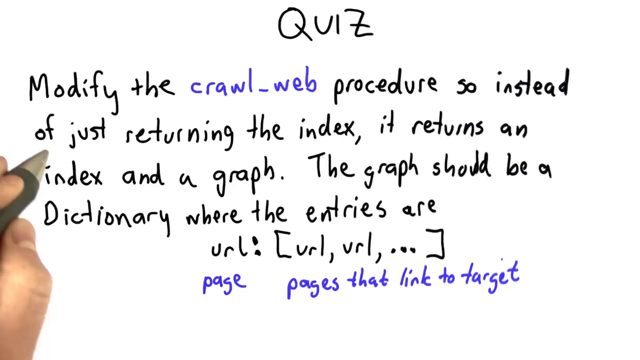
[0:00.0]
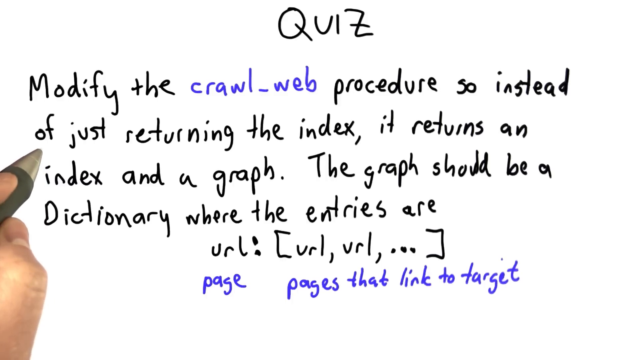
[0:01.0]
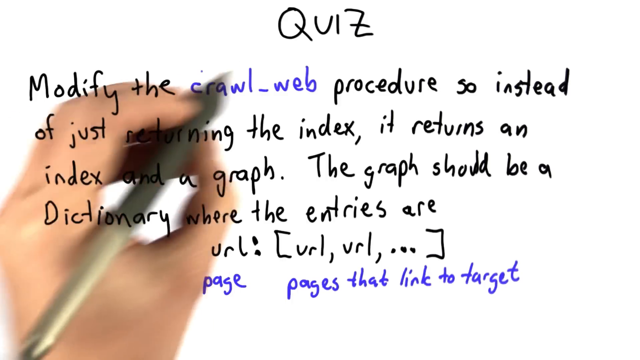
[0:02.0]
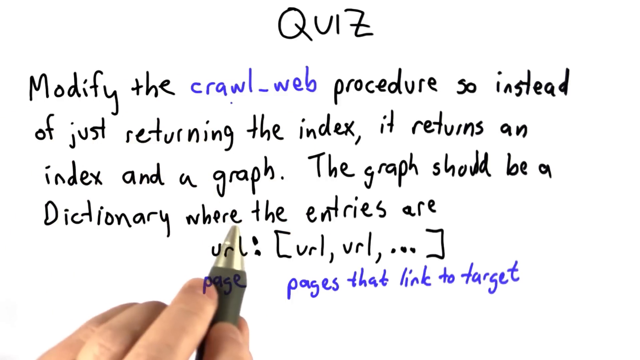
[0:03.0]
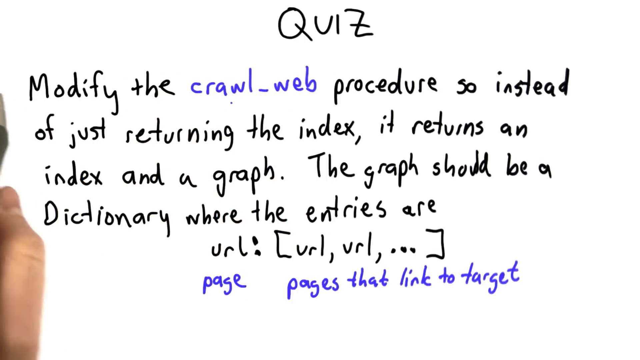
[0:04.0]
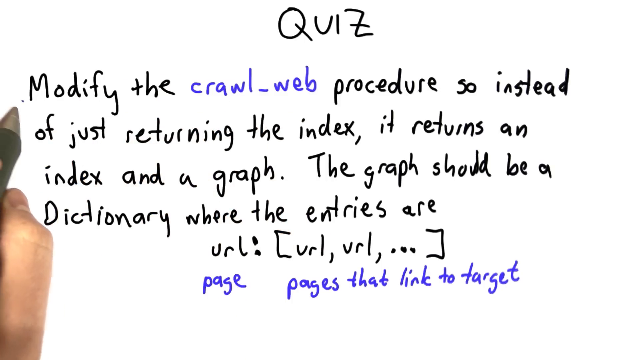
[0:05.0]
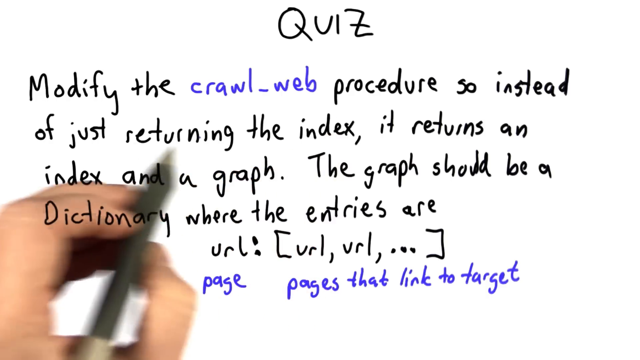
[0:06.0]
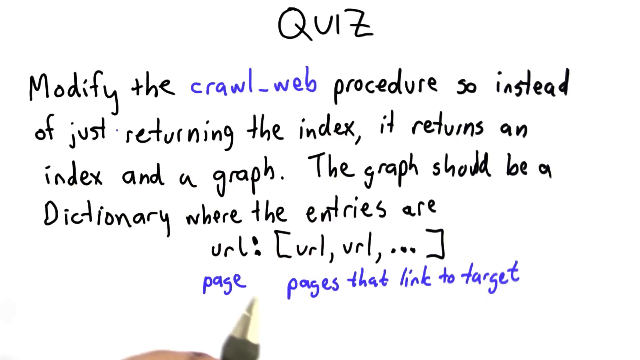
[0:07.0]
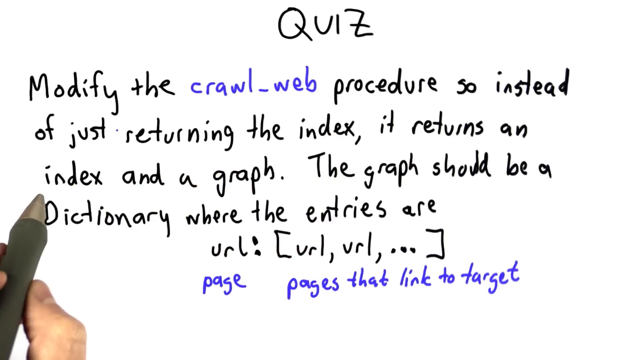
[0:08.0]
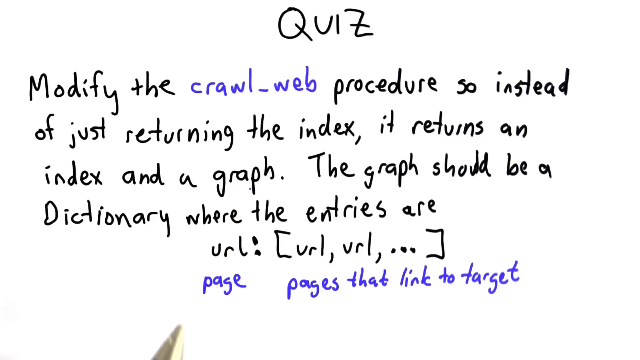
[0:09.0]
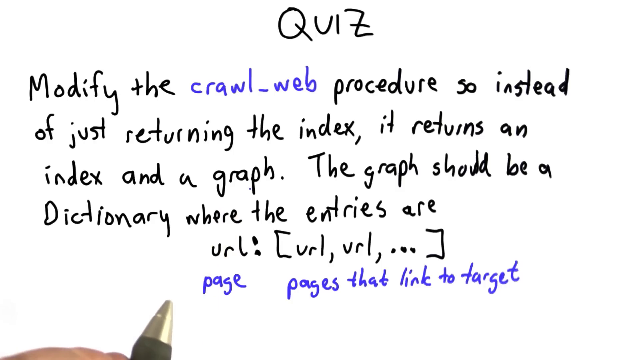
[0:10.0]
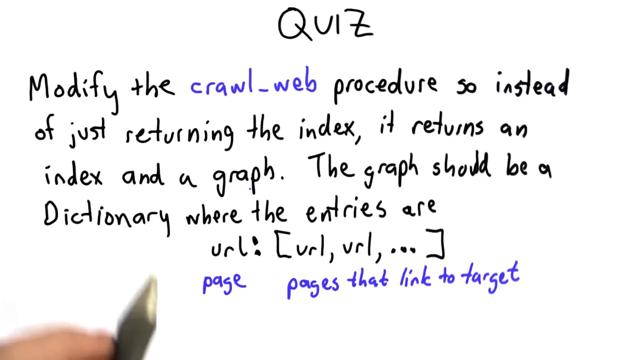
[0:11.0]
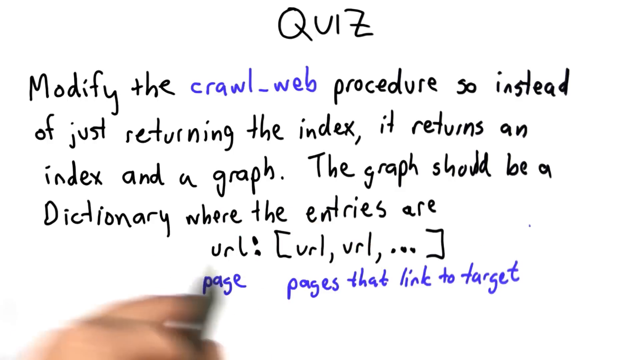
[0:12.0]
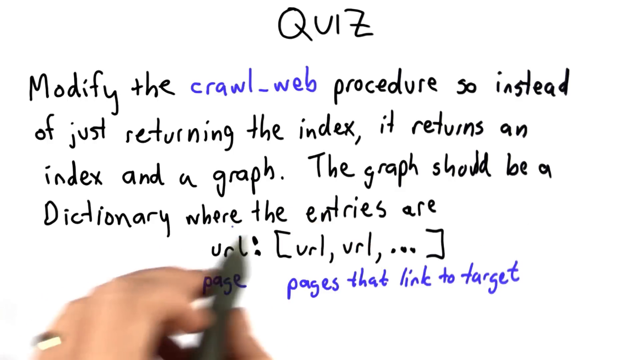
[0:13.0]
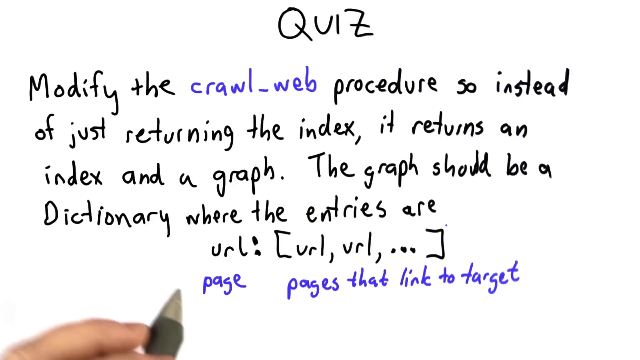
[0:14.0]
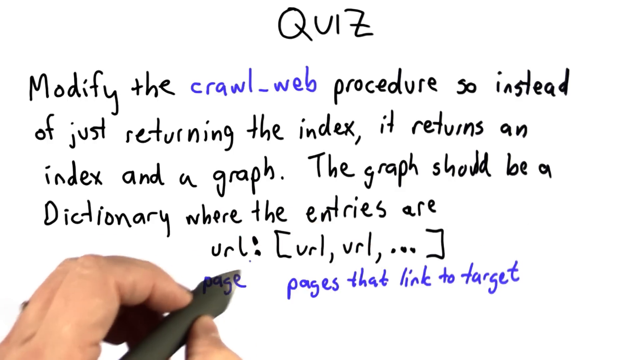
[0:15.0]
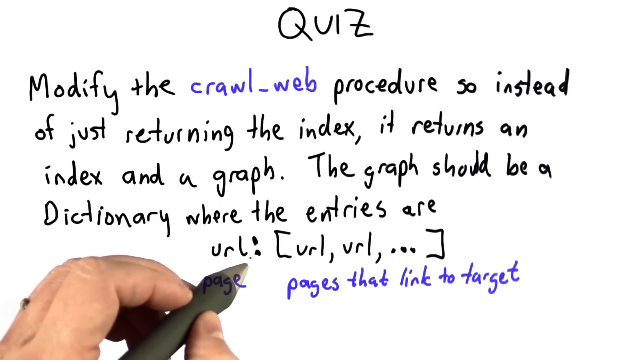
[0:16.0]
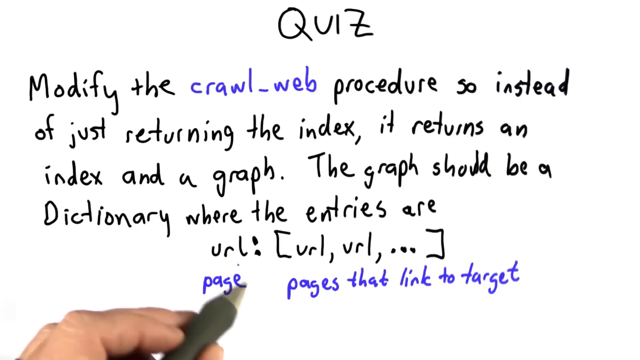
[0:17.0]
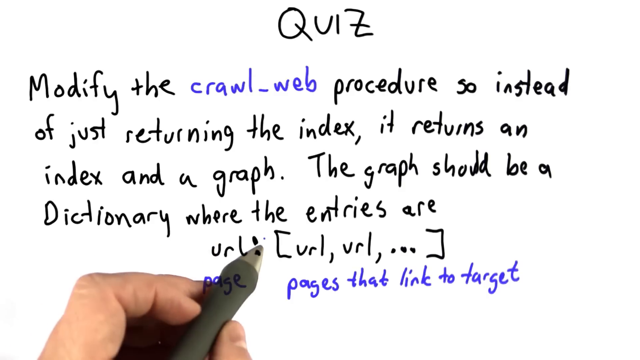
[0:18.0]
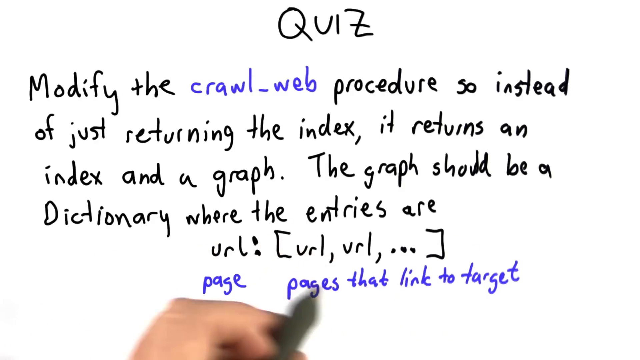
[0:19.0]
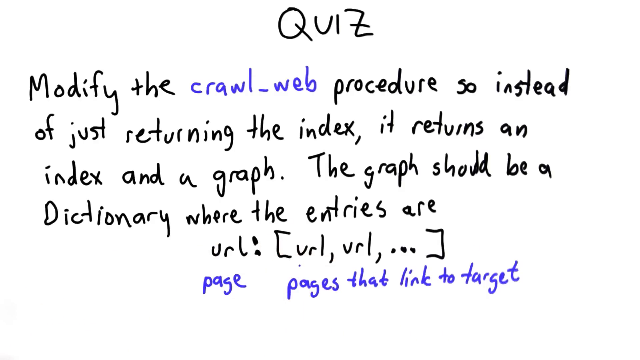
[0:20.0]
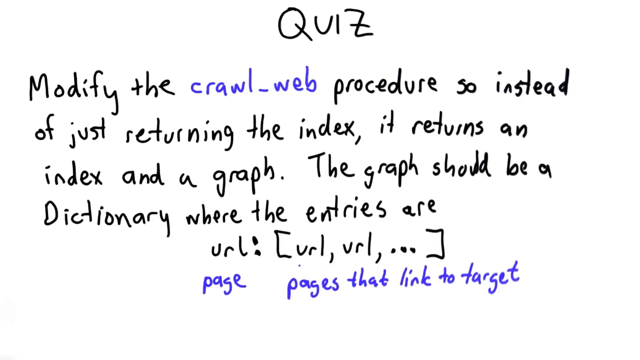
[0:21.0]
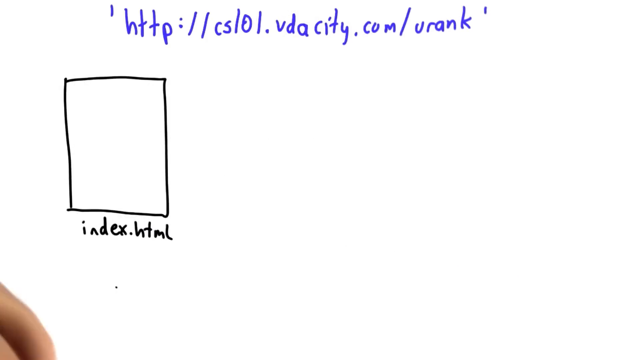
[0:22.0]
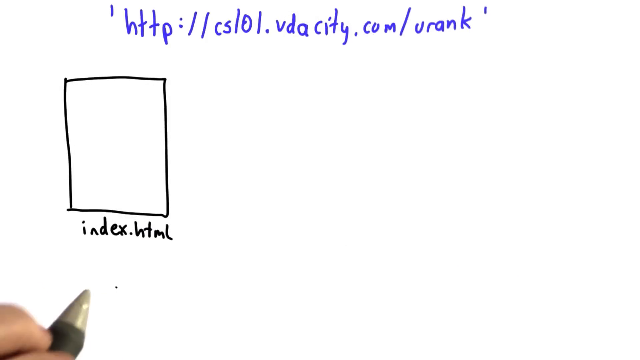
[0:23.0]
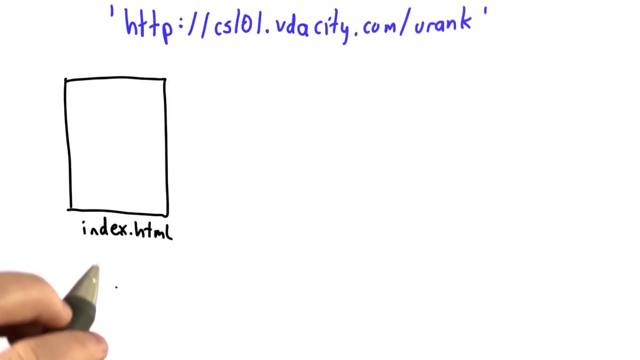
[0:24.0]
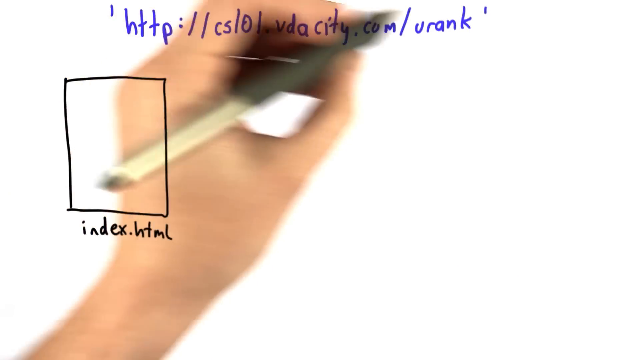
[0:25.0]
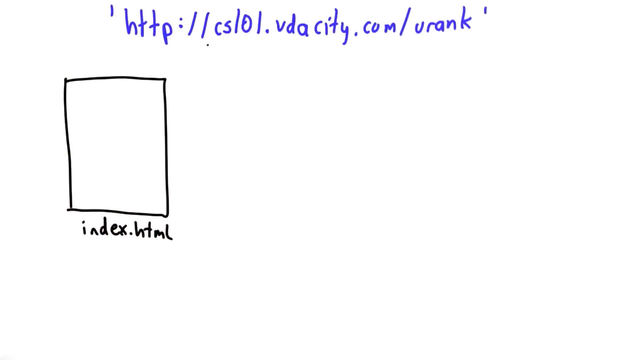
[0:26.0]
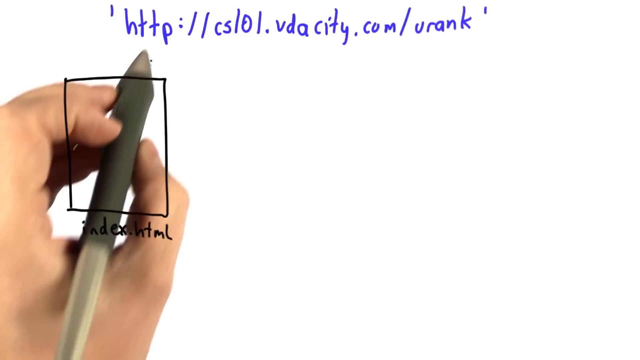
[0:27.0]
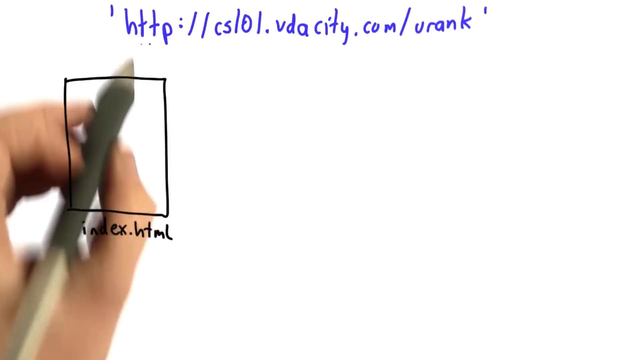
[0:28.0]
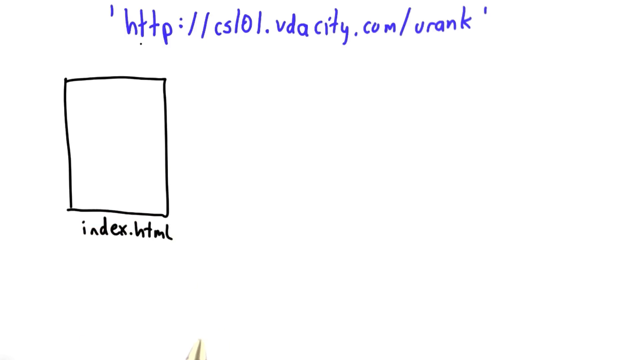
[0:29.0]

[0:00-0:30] A quiz is written at the top of the screen in black and blue text: "modify the crowdweb procedure so instead of just retaining the index it retains an index and a graph the graph should be dictionary where the entries are url". A person is visually explaining the whole procedure. Text also directs the viewer to go to a web address beginning with "http".